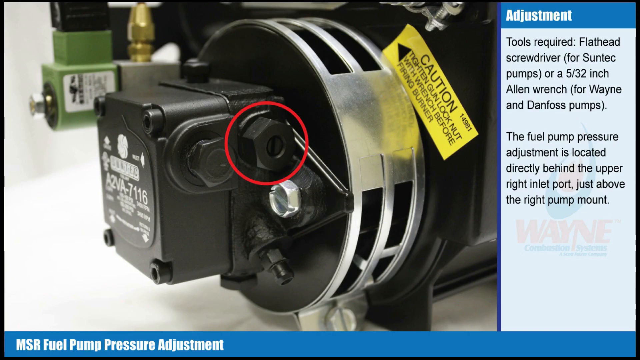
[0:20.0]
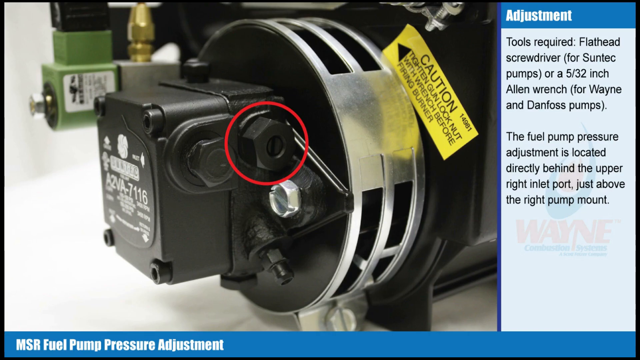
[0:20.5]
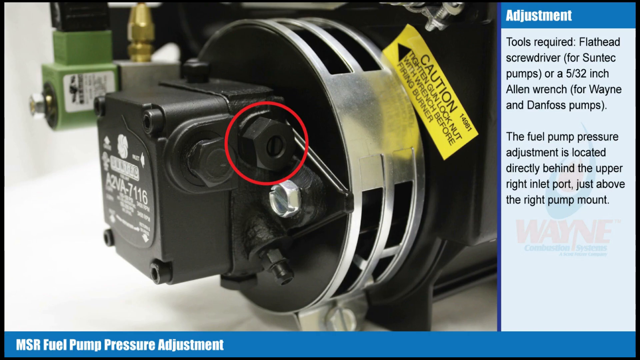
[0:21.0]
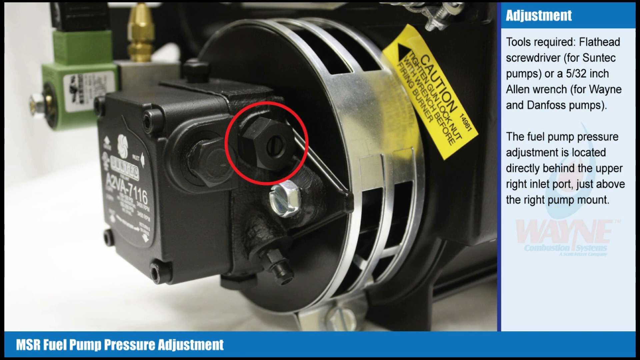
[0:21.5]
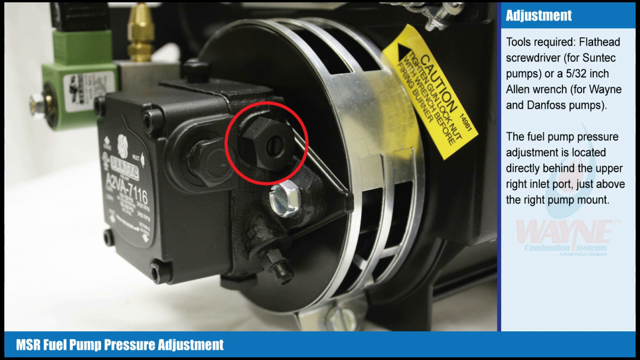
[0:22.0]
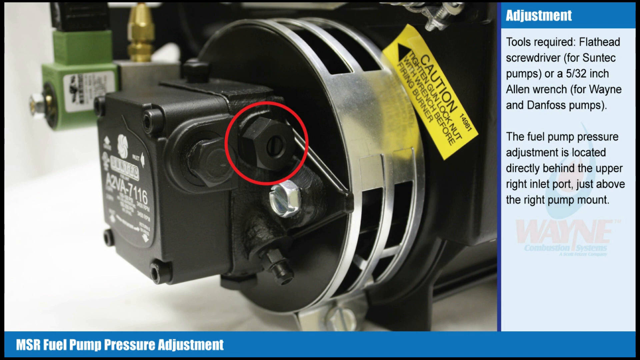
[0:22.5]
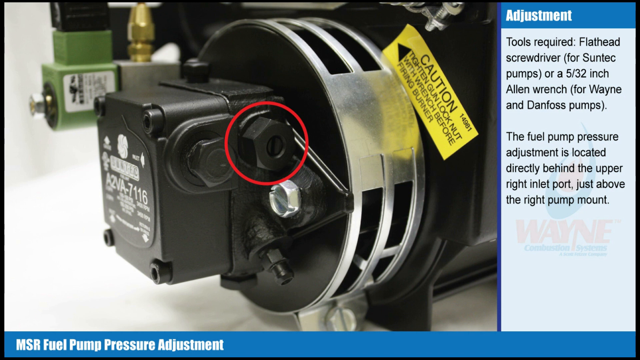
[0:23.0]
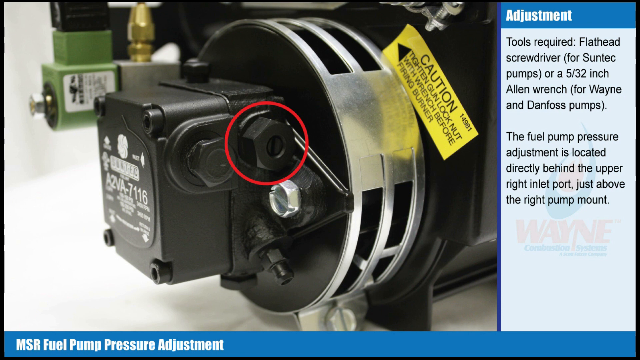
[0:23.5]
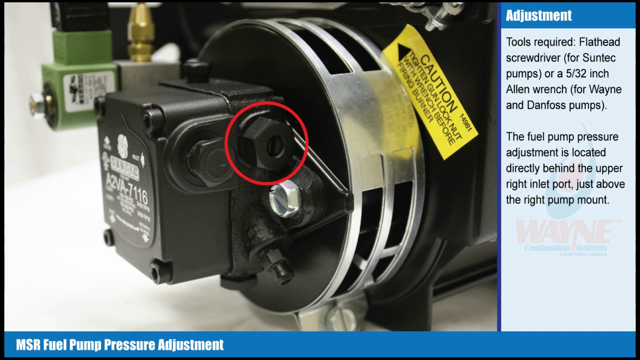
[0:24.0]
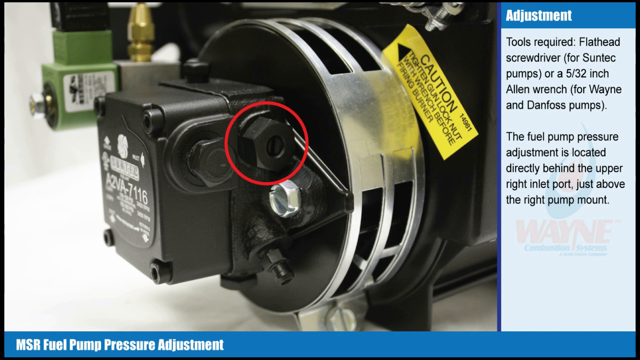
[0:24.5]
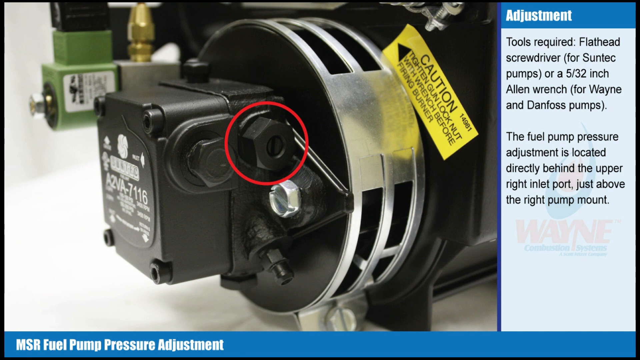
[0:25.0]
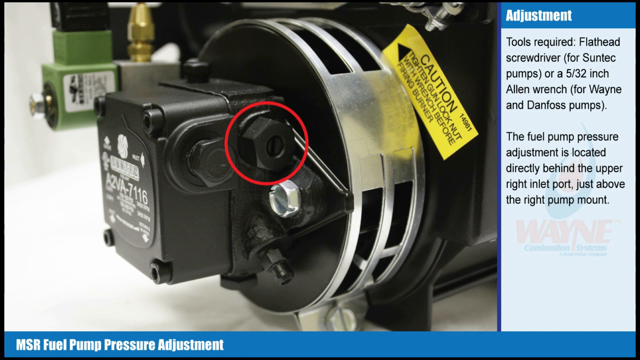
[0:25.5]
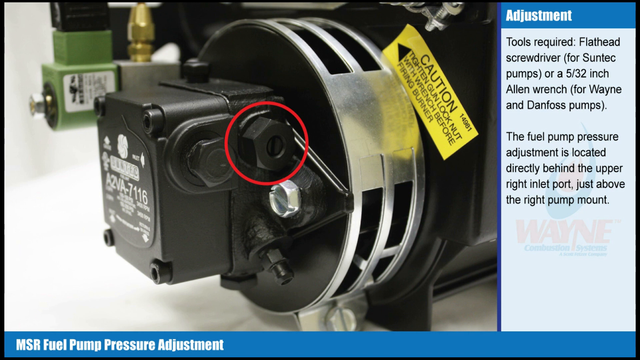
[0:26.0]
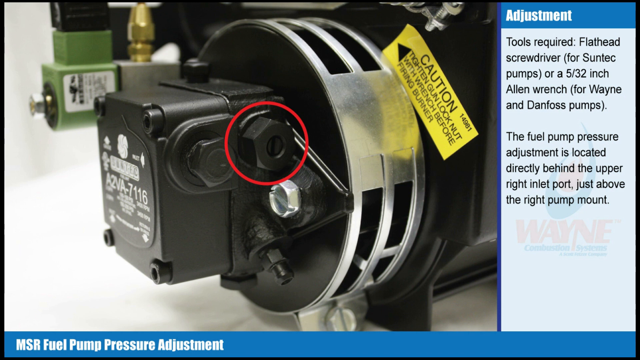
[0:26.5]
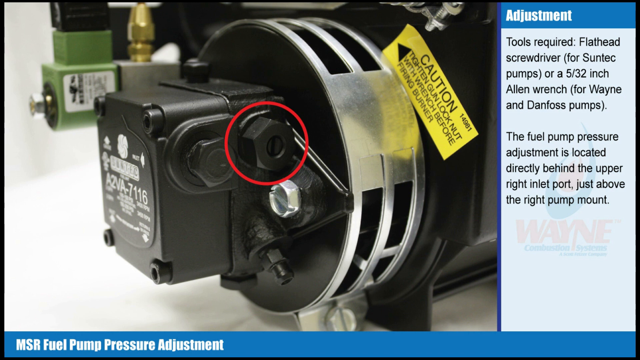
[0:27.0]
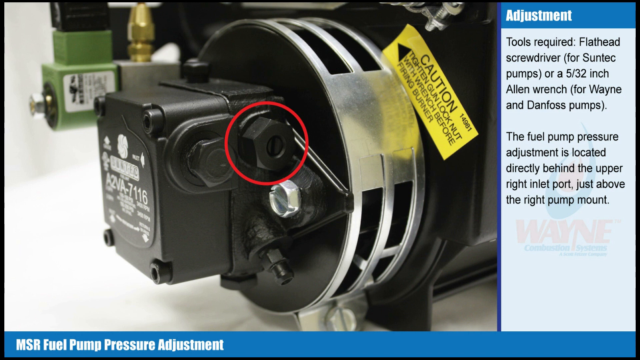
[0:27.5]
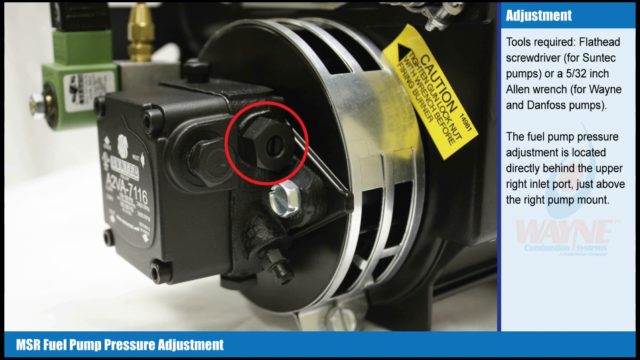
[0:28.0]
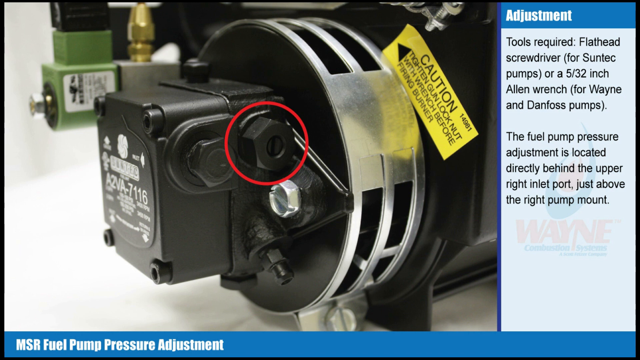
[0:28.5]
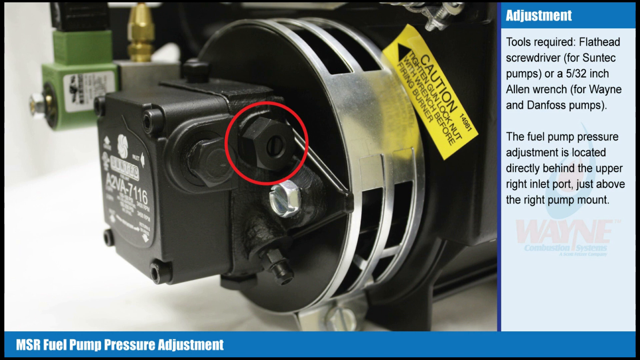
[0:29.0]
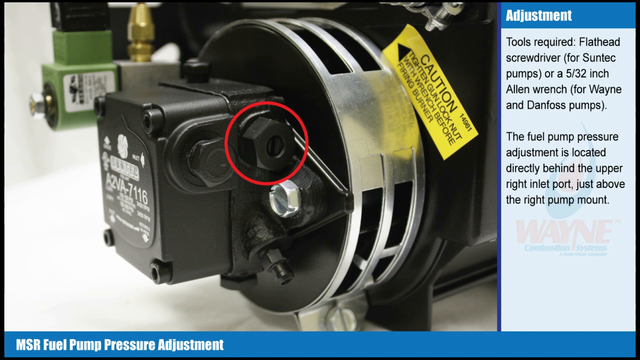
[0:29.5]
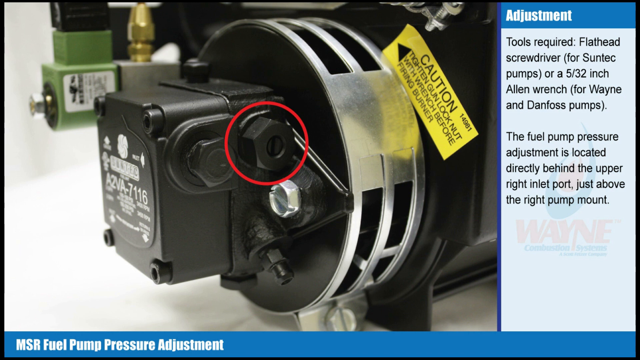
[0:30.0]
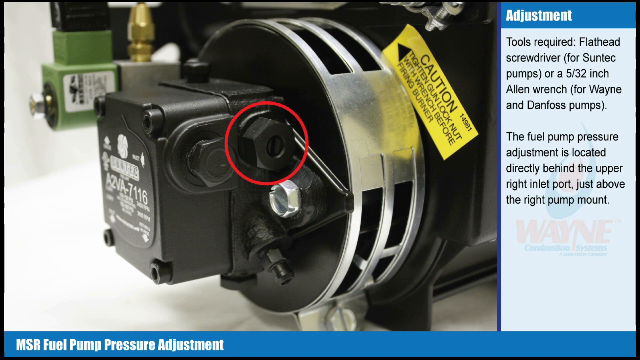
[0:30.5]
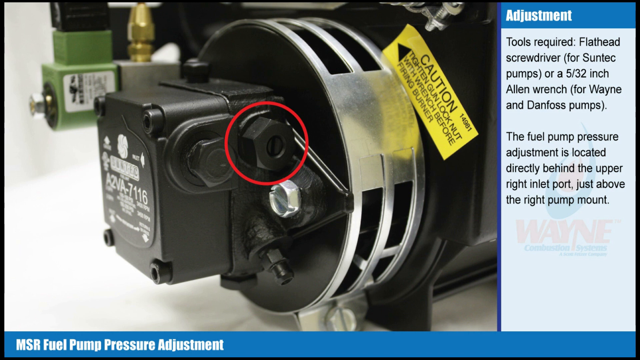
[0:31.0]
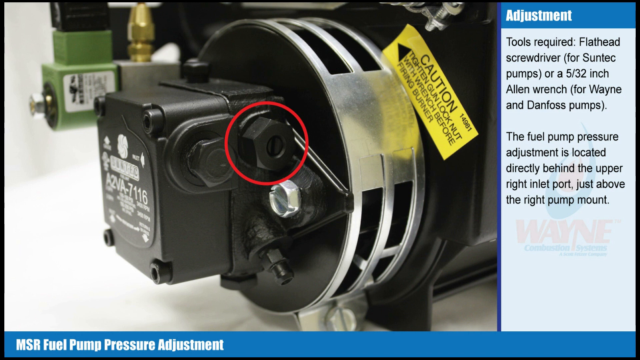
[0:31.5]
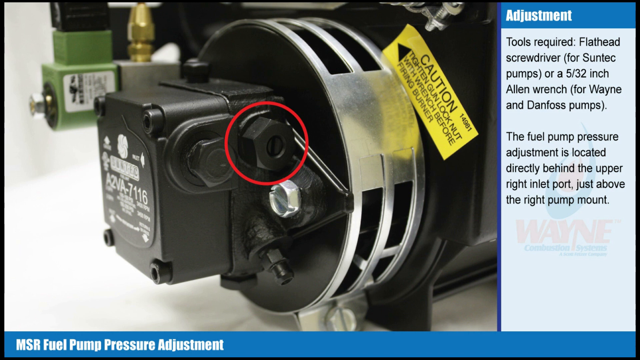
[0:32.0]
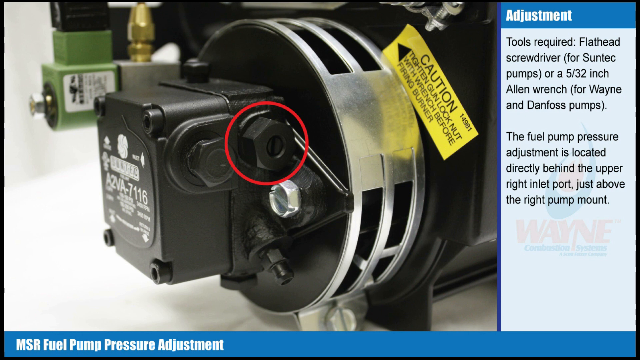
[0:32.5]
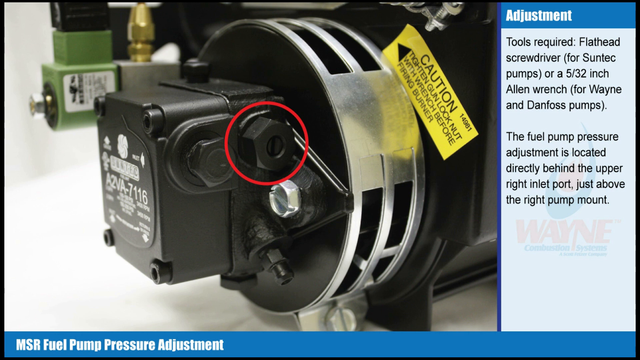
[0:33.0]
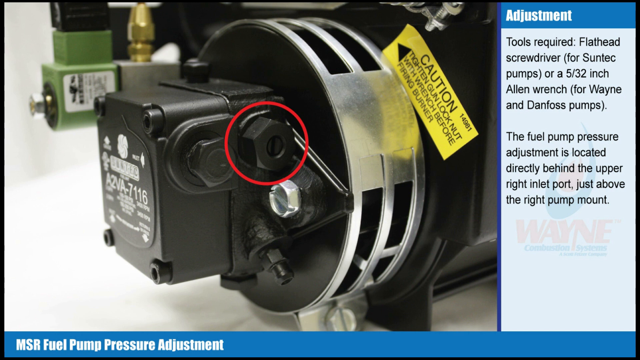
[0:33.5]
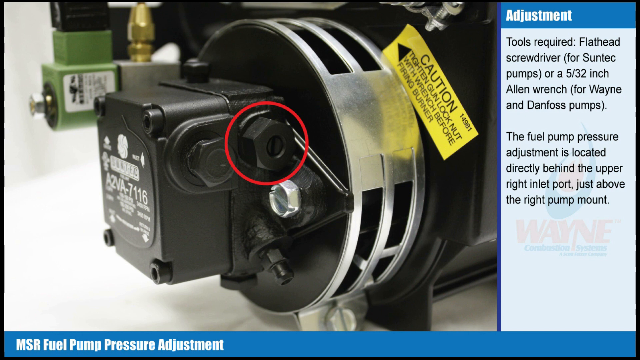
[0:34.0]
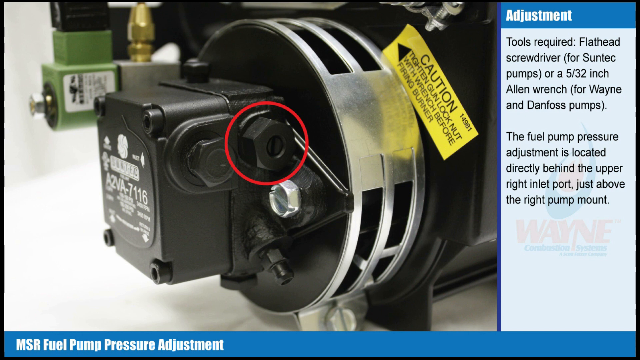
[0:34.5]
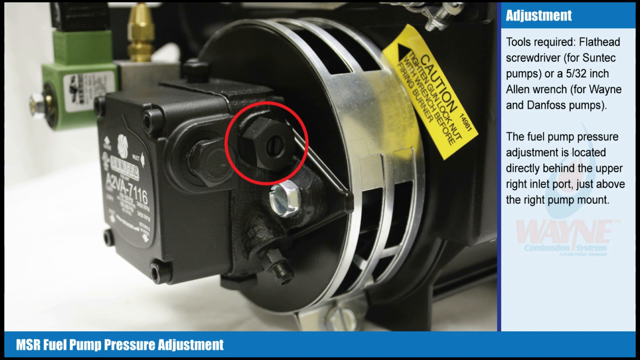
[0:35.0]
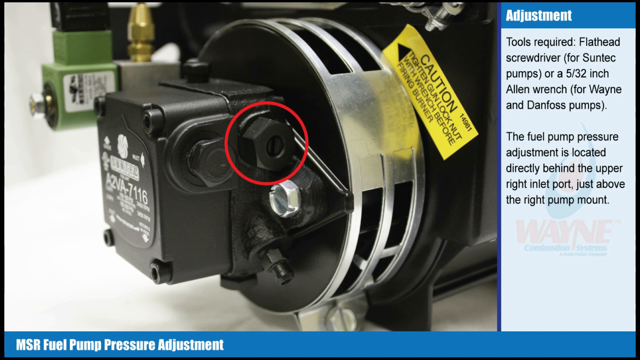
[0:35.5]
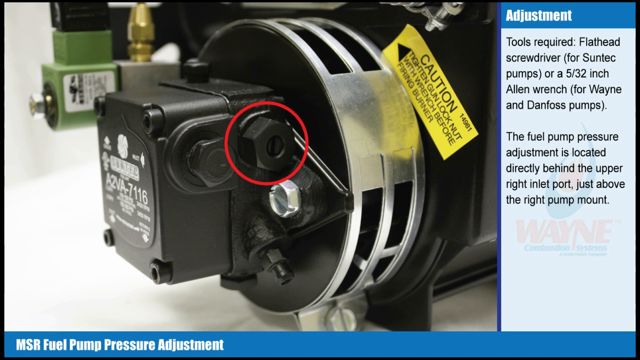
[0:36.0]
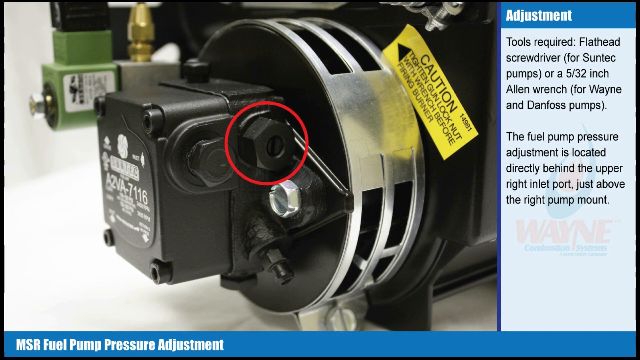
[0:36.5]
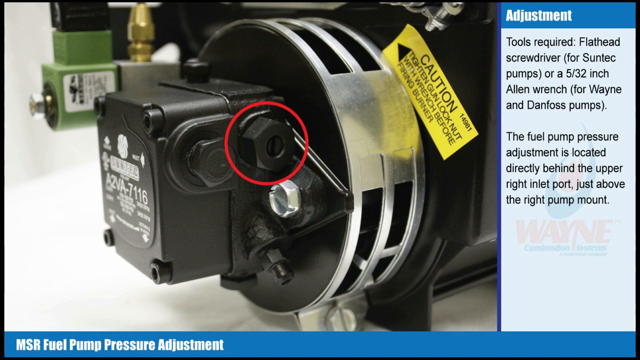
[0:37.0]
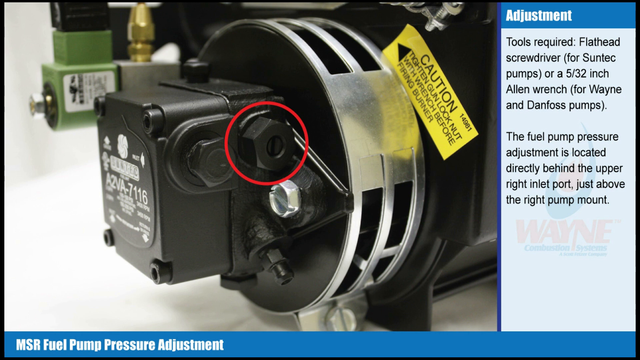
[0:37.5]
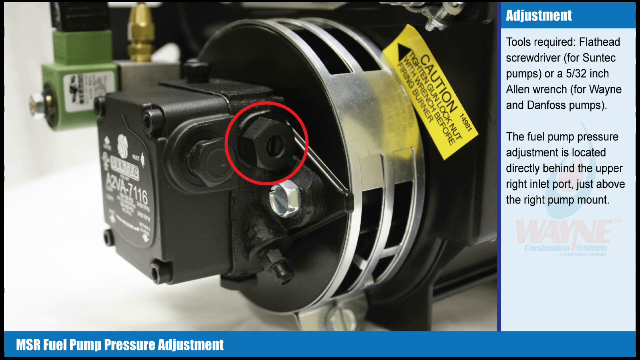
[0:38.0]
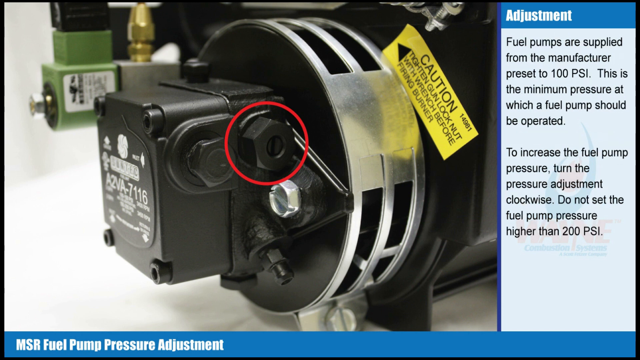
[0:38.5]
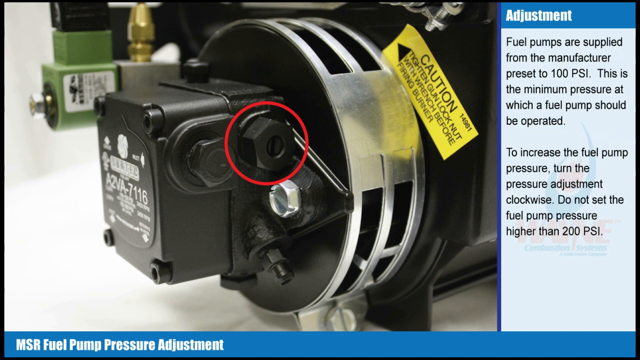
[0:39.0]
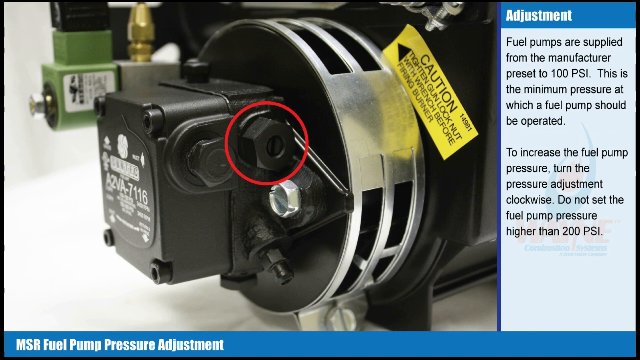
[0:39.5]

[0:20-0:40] A close-up shows the fuel pump, with a red circle highlighting a screw in the center of the screen. The pump is mostly black with a silver ring going around it and takes up about two-thirds of the screen. A caution tab on the top right of the pump reads "tighten gun lock nut with wrench before firing burner." On the far right of the screen is a text box with white text at the top reading "Adjustment." The text below reads "tools required, flathead screwdriver for SunTec pumps, or a 5/32-inch Allen wrench for Wayne and Dan Foss pumps. The fuel pump pressure adjustment is located directly behind the upper right inlet port just above the right pump mount." Behind the text is a faded background showing the Wayne Combustion Systems company logo.